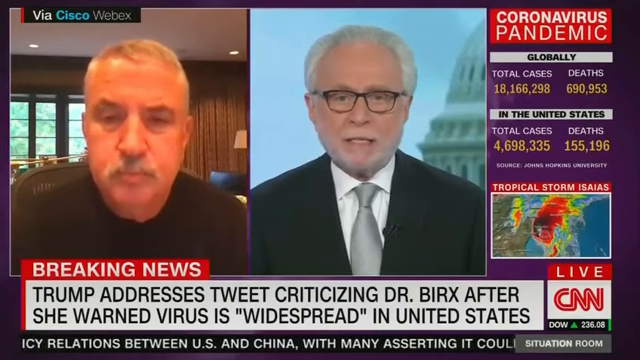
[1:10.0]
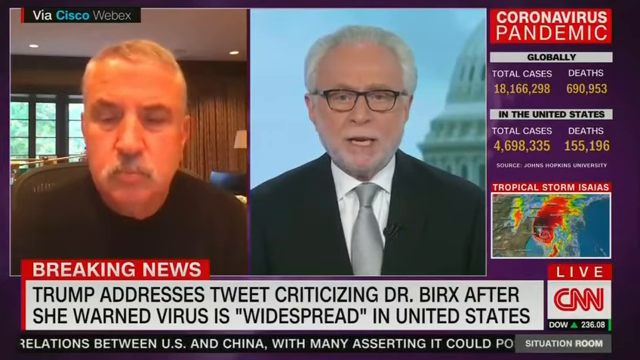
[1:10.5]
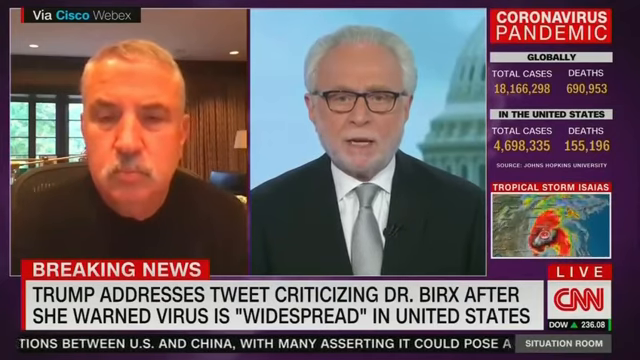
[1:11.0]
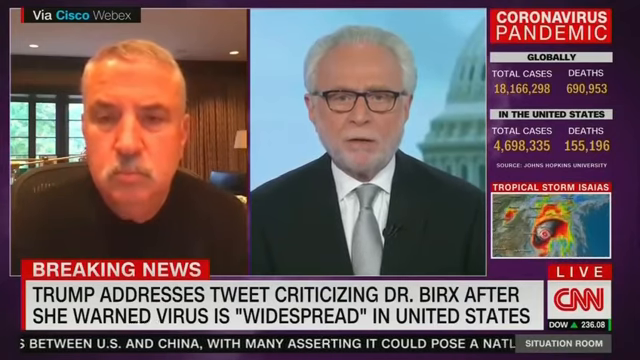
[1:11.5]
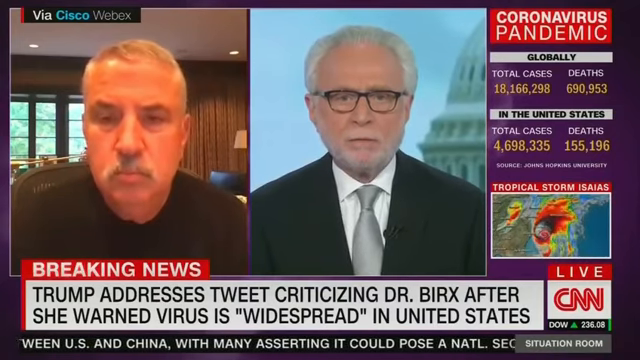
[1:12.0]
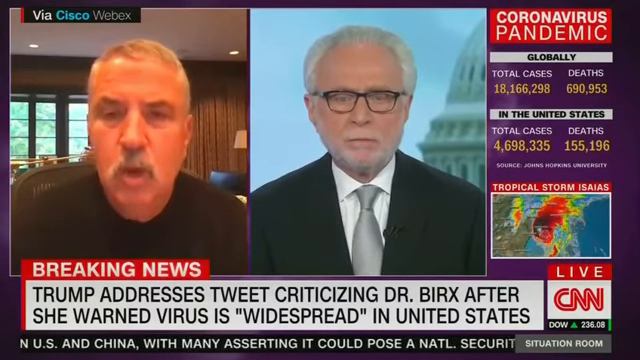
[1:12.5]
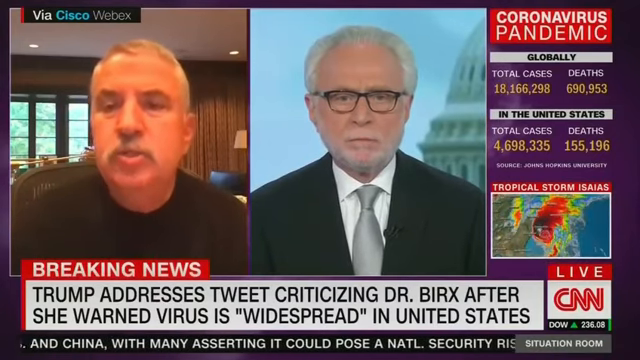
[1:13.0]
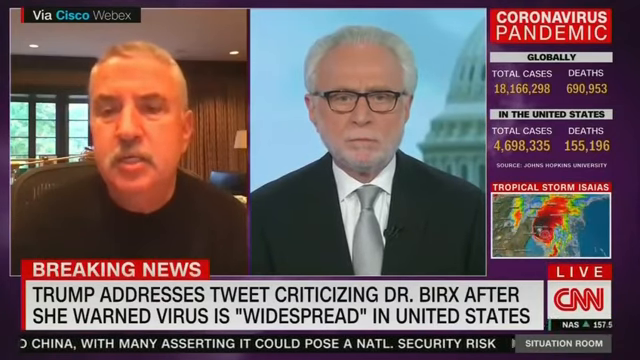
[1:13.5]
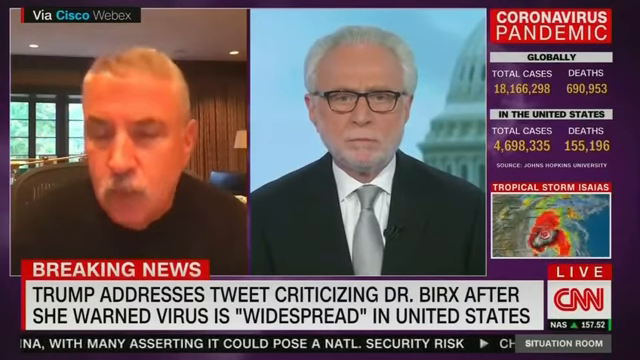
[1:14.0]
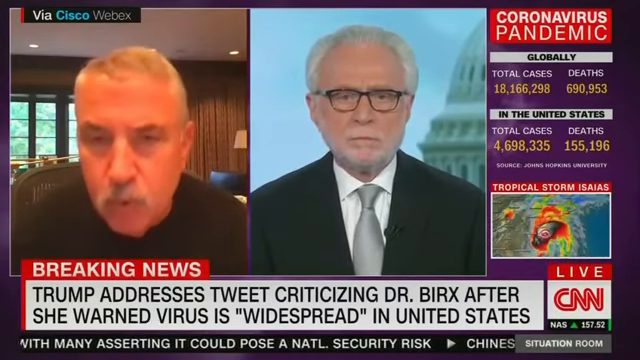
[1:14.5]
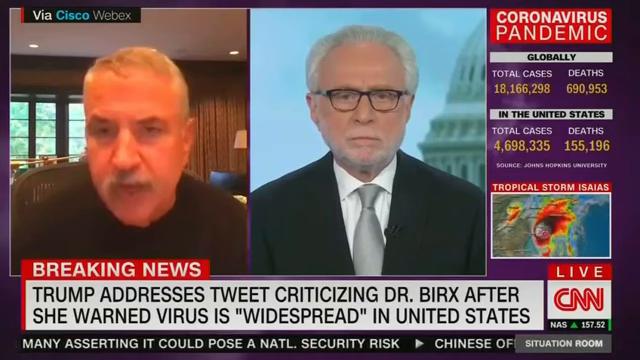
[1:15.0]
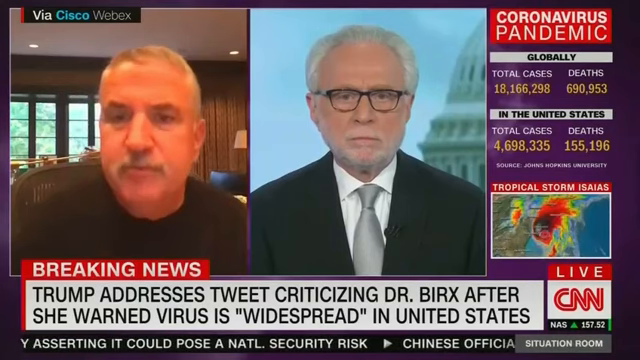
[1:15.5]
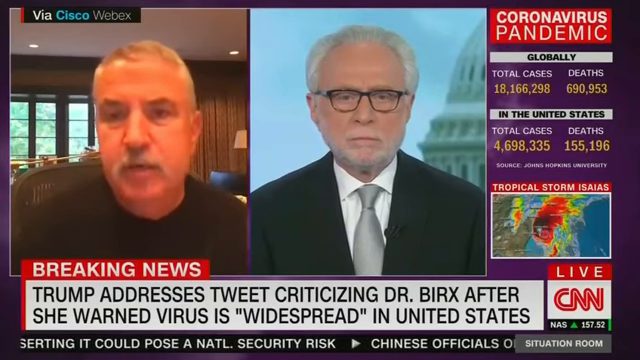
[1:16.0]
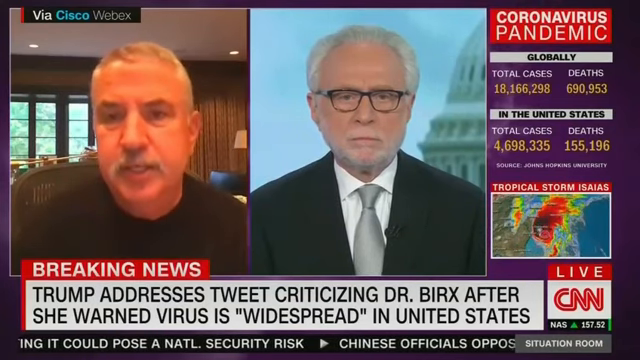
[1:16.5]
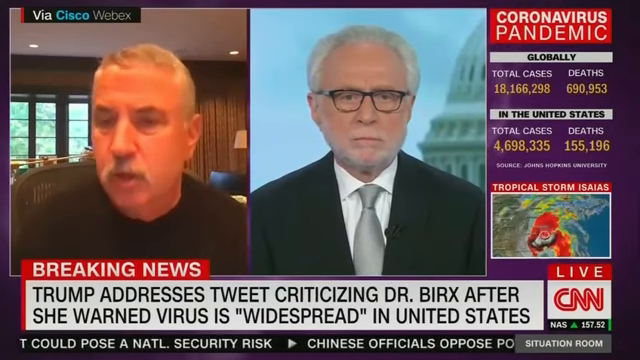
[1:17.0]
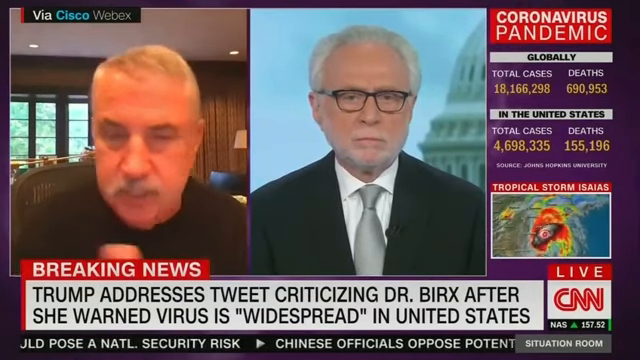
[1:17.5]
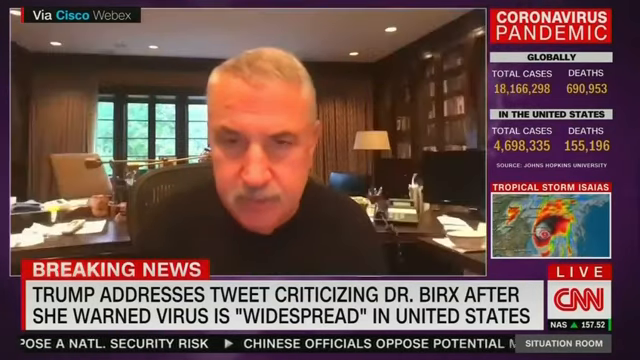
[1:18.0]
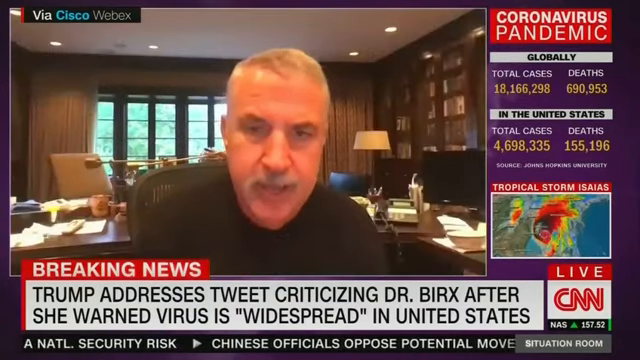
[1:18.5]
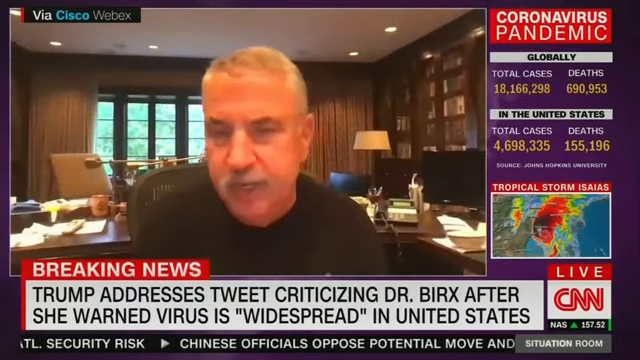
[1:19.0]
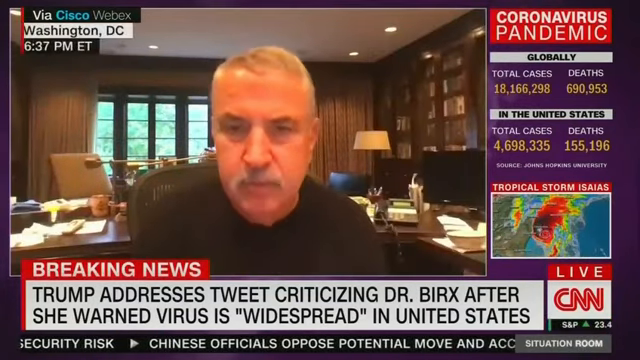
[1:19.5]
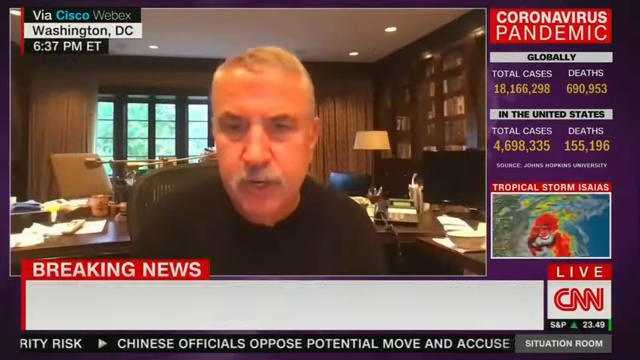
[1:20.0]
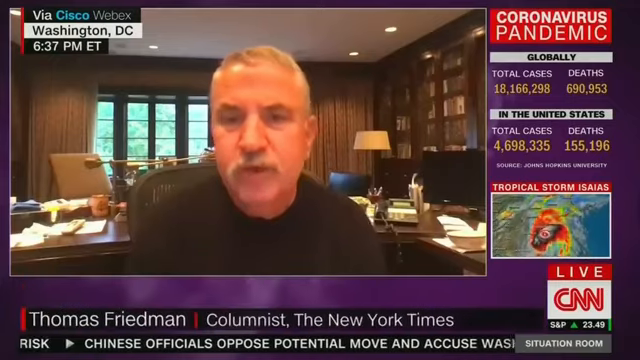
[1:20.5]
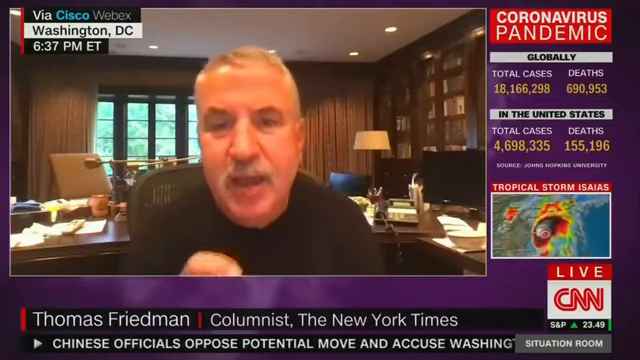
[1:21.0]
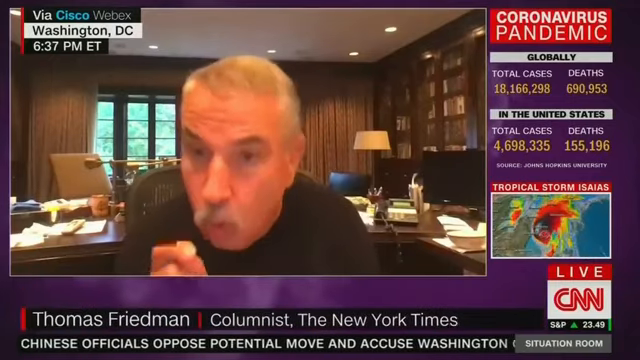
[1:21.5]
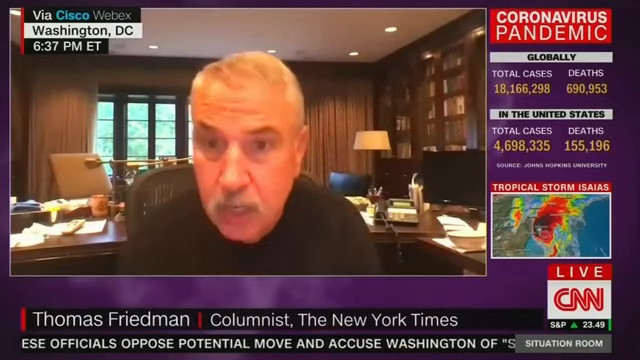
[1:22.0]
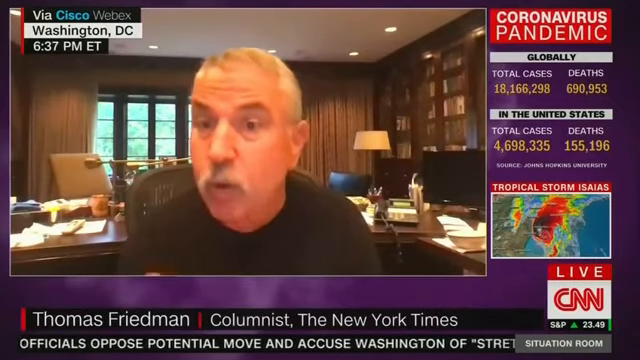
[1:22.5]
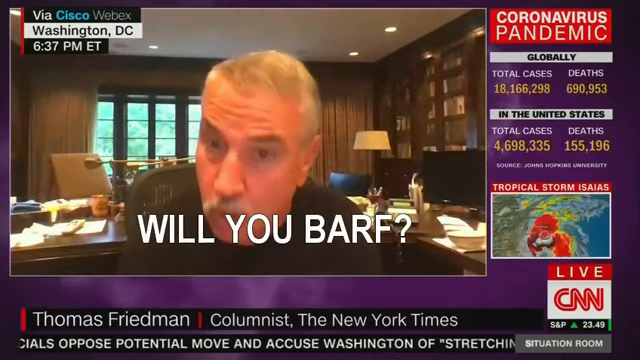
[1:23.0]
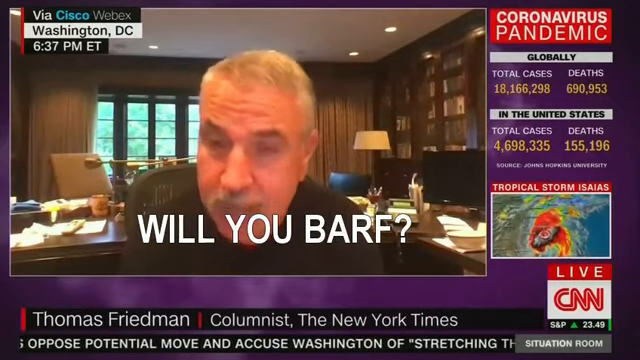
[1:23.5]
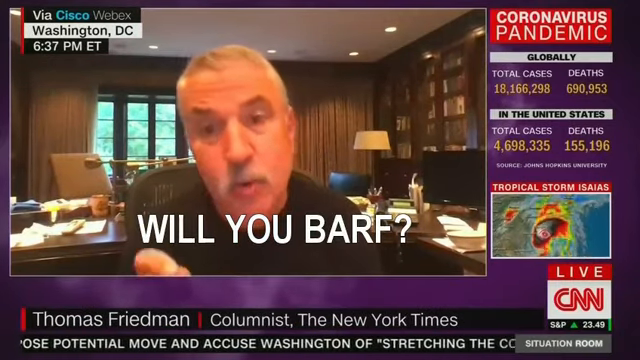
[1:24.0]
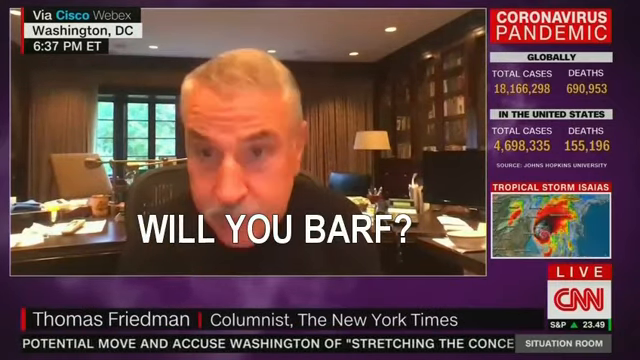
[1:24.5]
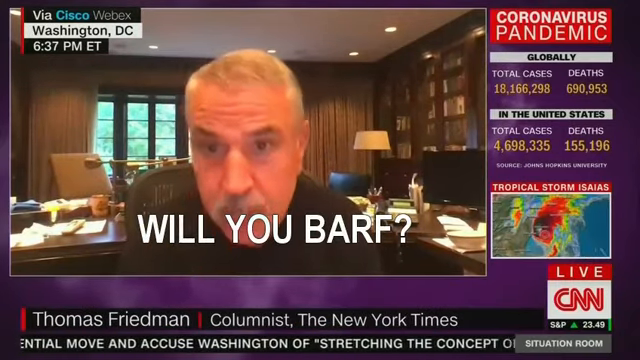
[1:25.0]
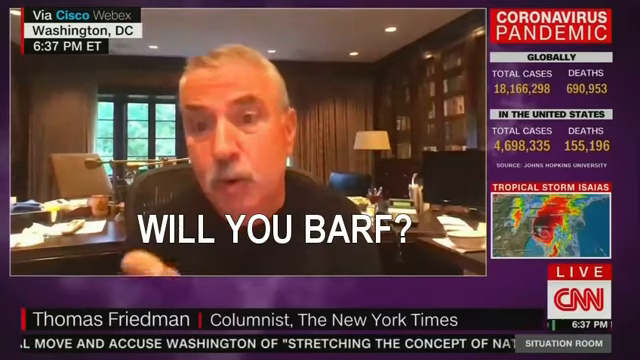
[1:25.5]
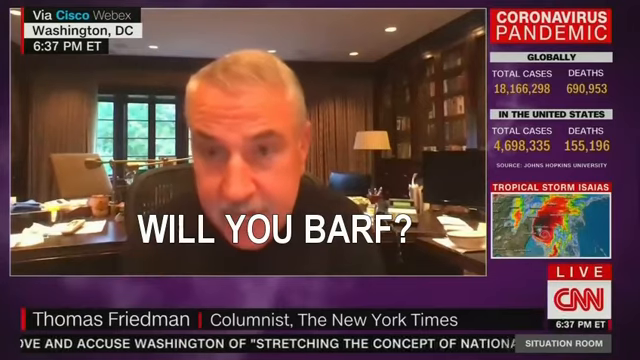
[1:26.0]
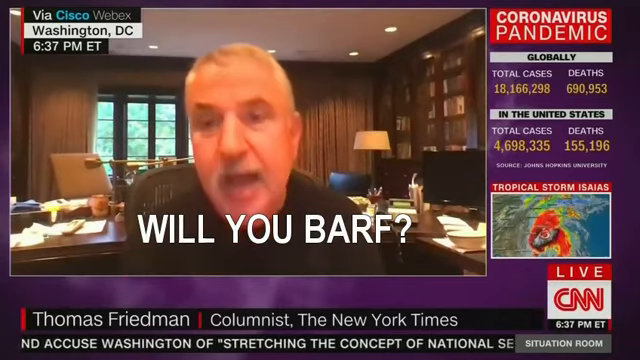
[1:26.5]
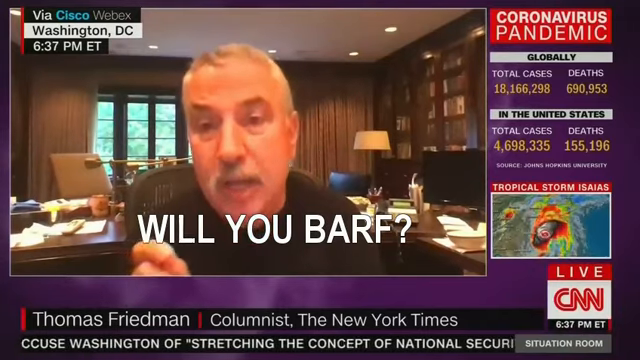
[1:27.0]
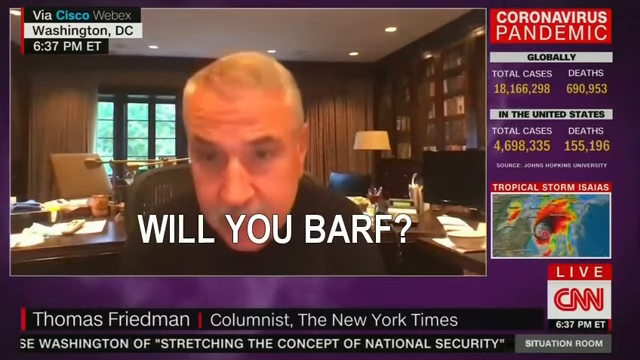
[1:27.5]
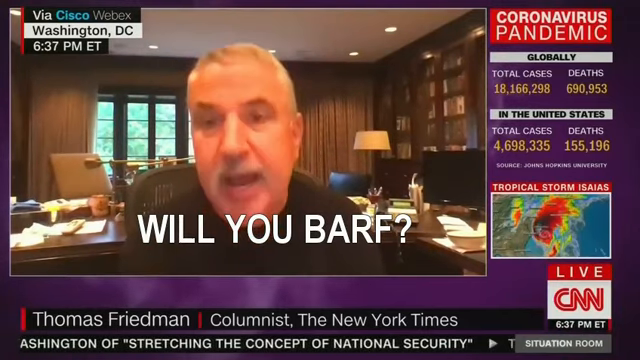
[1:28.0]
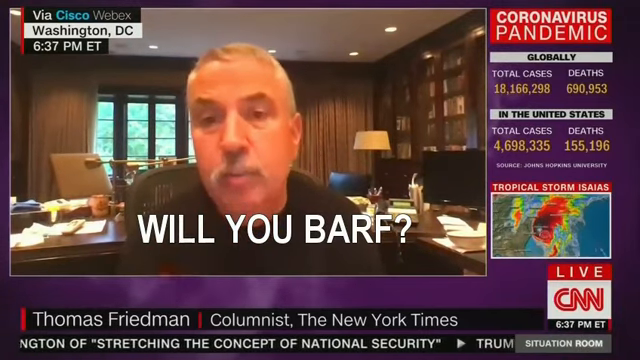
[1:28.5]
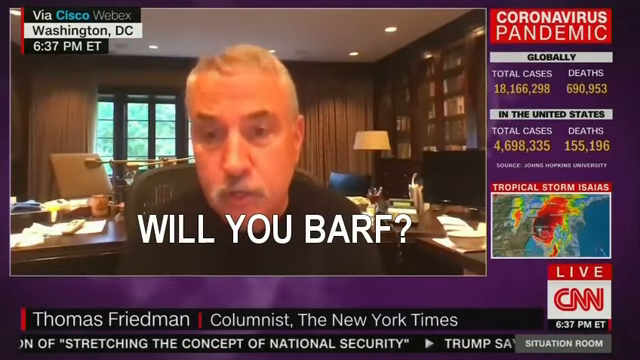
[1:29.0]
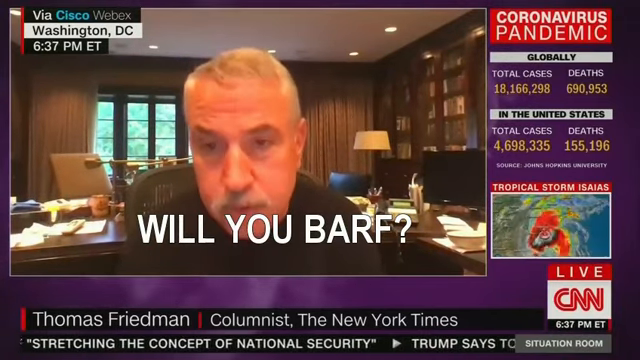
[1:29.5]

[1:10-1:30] Wolf Blitzer is in the CNN newsroom, live on CNN. A breaking news banner reads "Trump addresses tweet criticizing Dr. Birx after she warned virus is widespread in the United States." Text reads "coronavirus pandemic globally" with total cases and deaths, plus total cases and deaths in the United States, and some type of tropical storm on the east coast is being tracked. The man talking wears a black shirt; he is identified as Thomas Friedman, columnist, New York Times, in Washington DC. The two talk back and forth. Text on the screen then reads "will you barf?" in white letters.